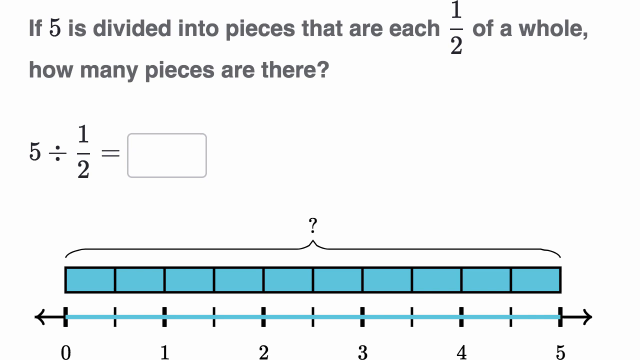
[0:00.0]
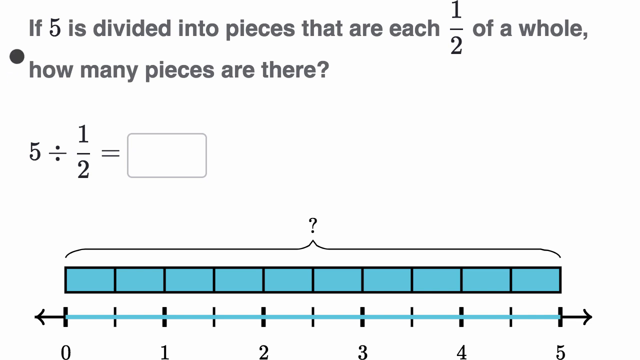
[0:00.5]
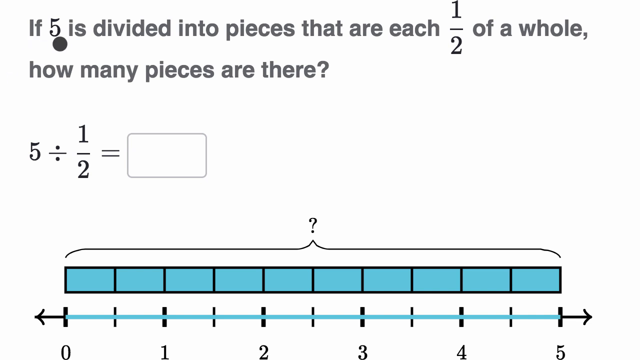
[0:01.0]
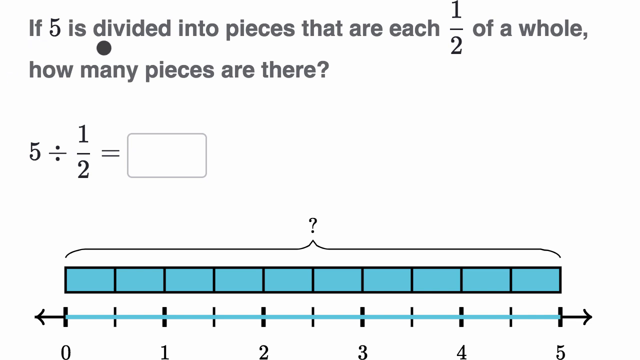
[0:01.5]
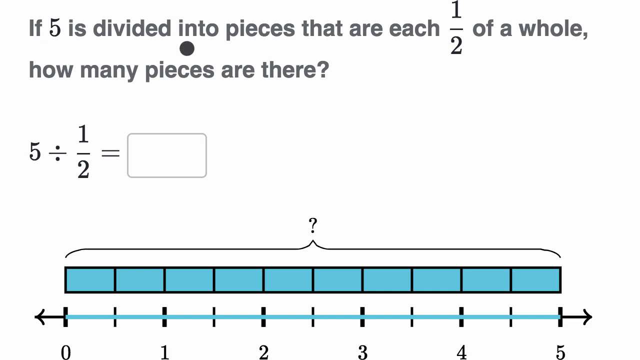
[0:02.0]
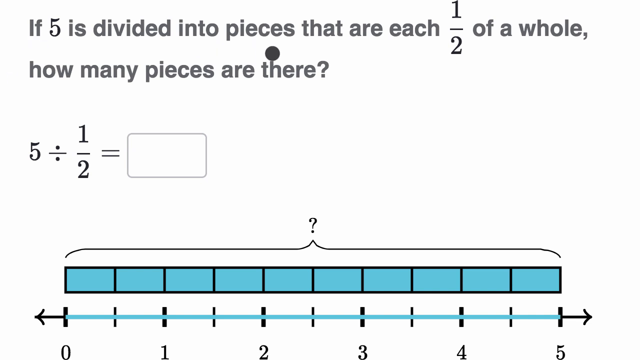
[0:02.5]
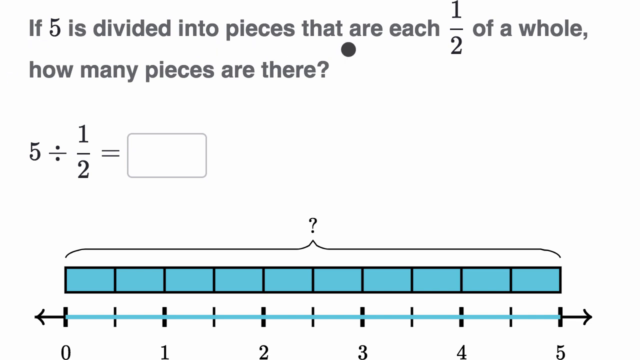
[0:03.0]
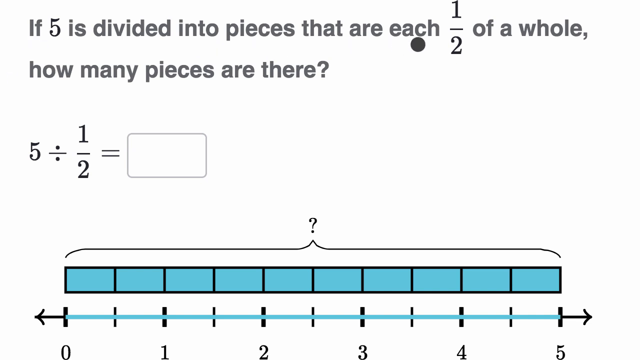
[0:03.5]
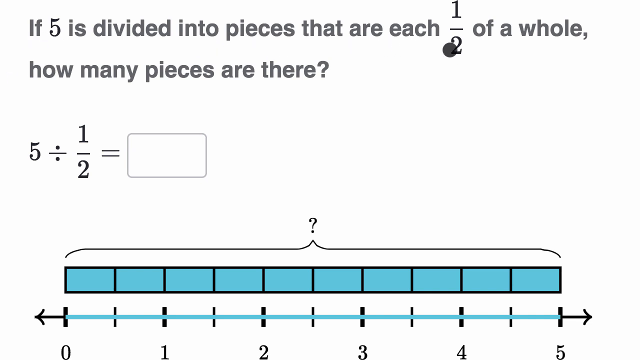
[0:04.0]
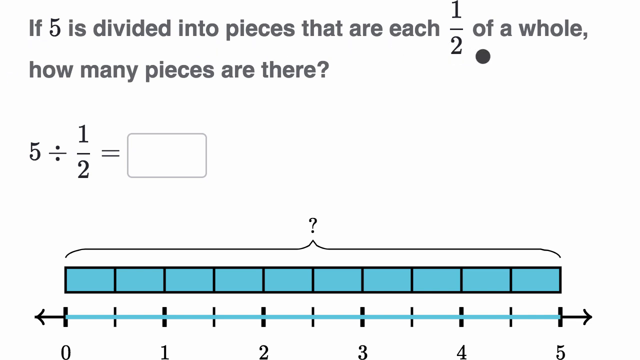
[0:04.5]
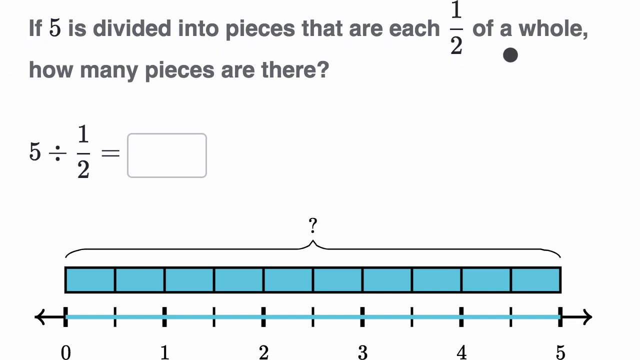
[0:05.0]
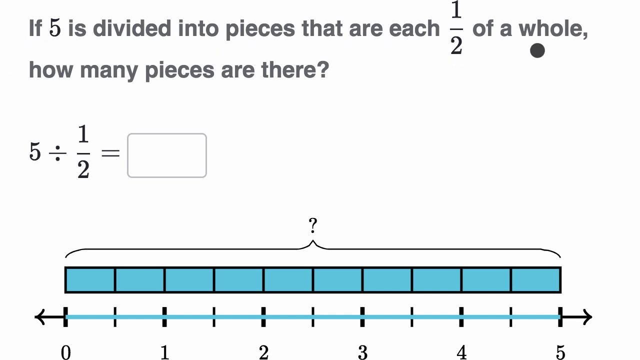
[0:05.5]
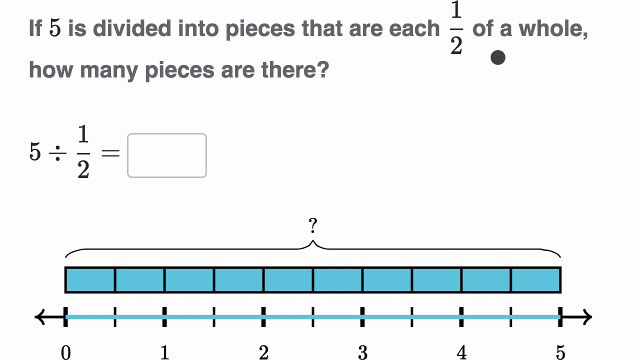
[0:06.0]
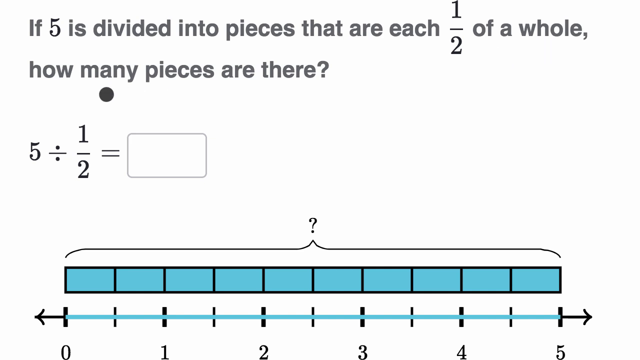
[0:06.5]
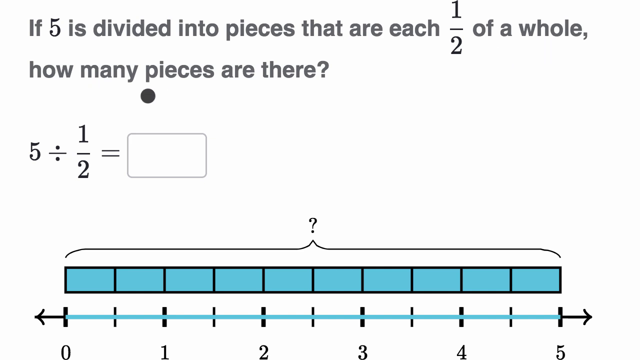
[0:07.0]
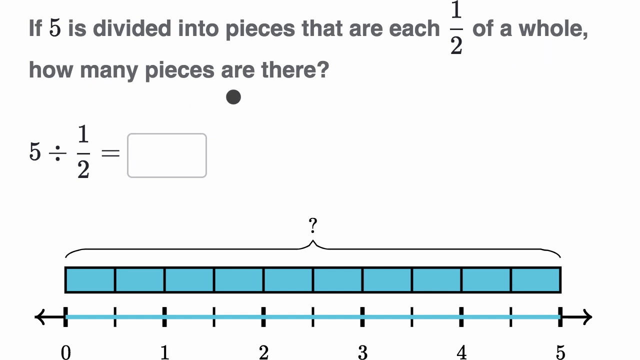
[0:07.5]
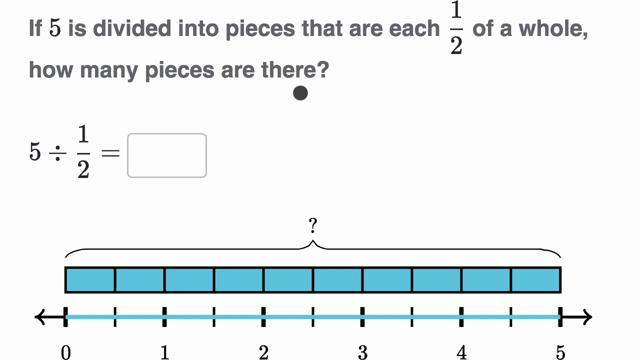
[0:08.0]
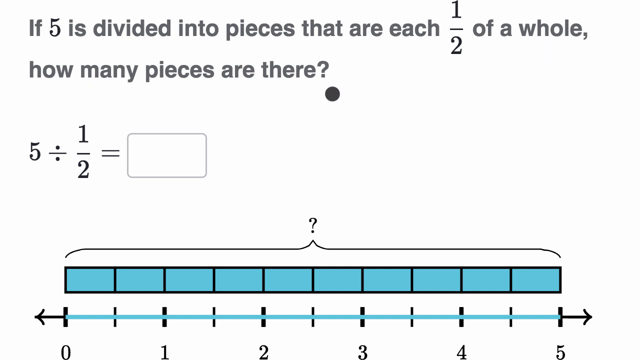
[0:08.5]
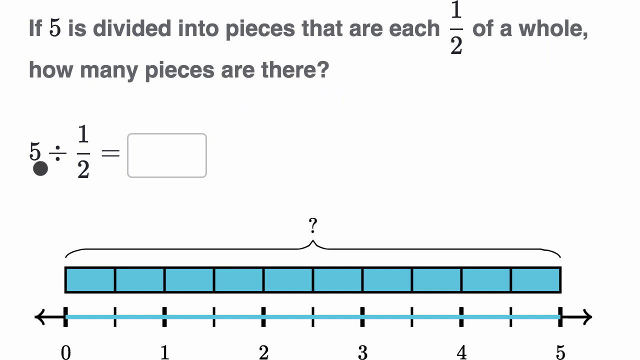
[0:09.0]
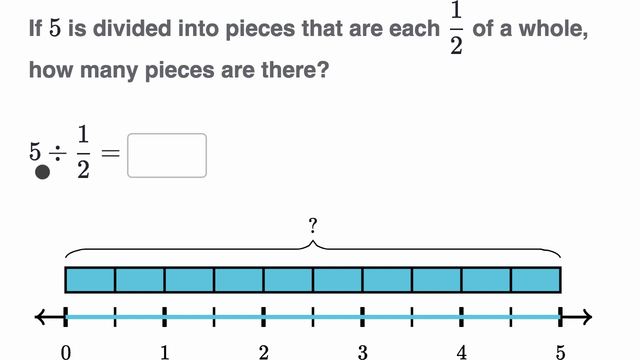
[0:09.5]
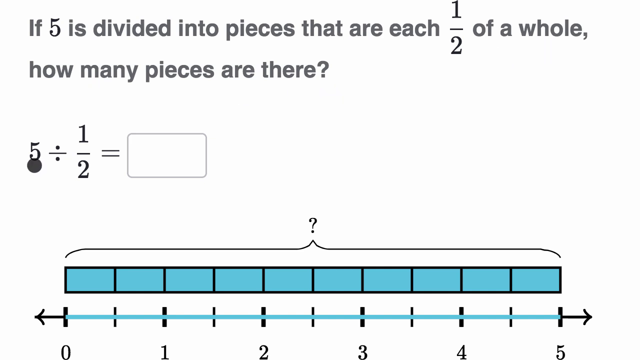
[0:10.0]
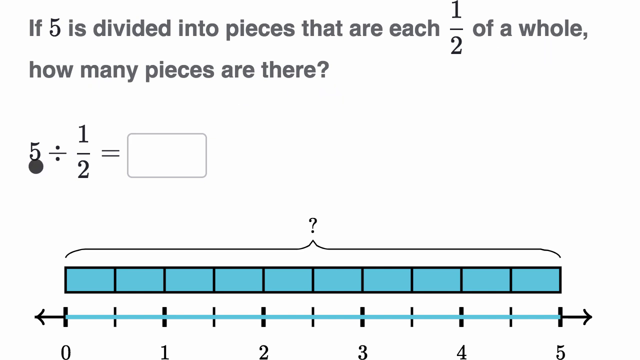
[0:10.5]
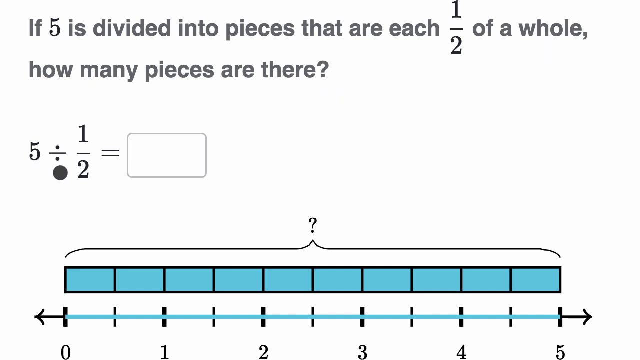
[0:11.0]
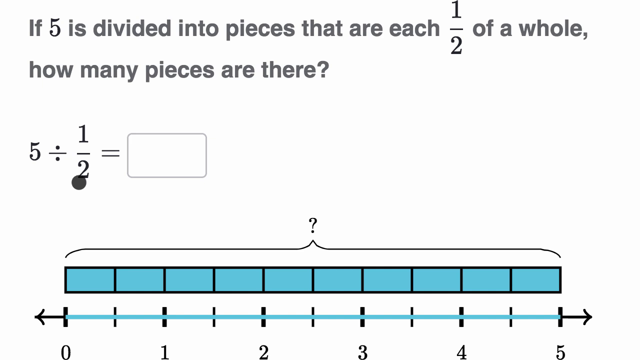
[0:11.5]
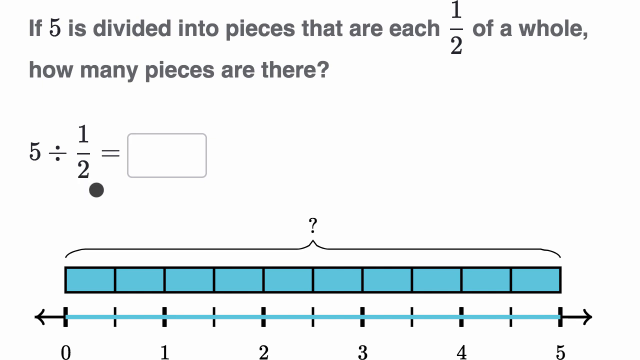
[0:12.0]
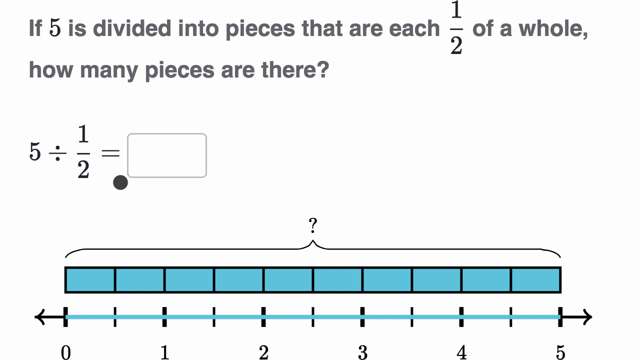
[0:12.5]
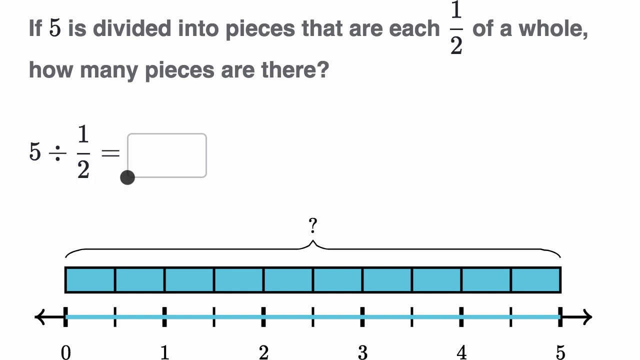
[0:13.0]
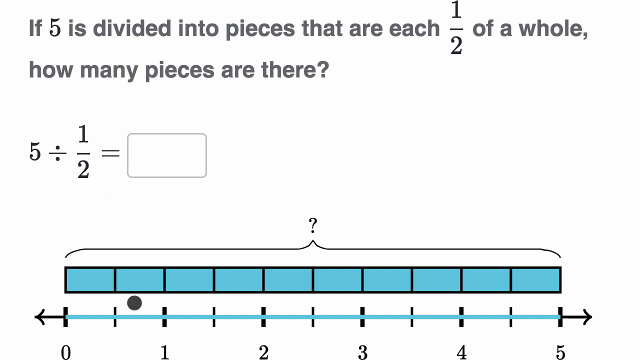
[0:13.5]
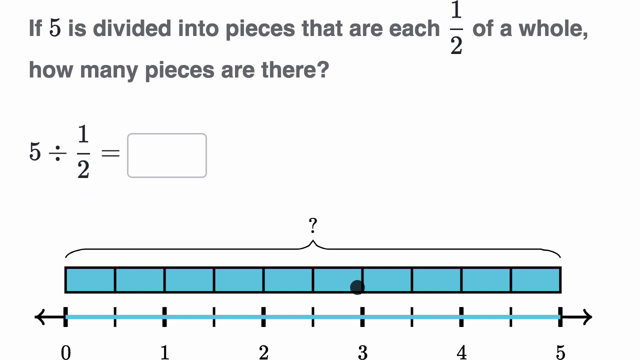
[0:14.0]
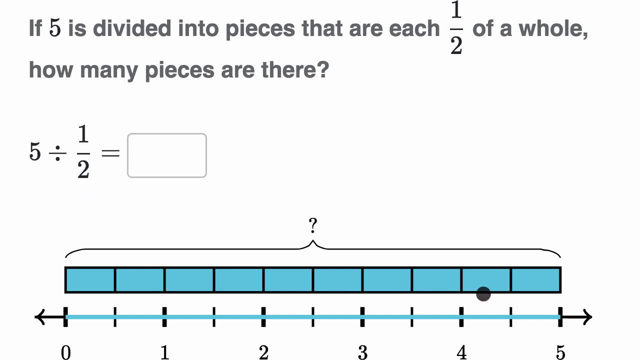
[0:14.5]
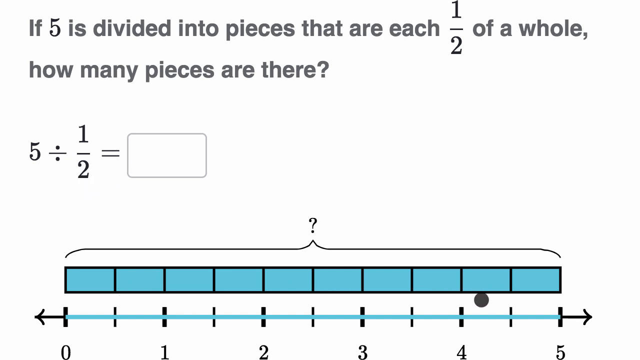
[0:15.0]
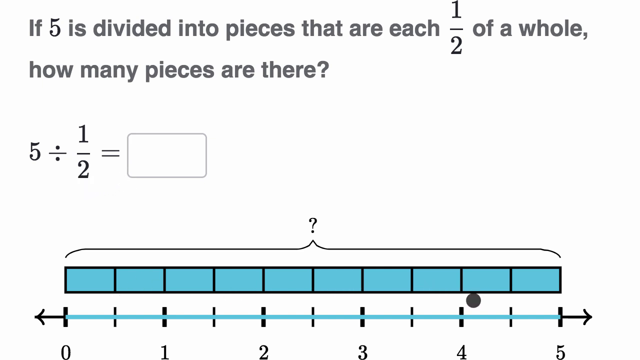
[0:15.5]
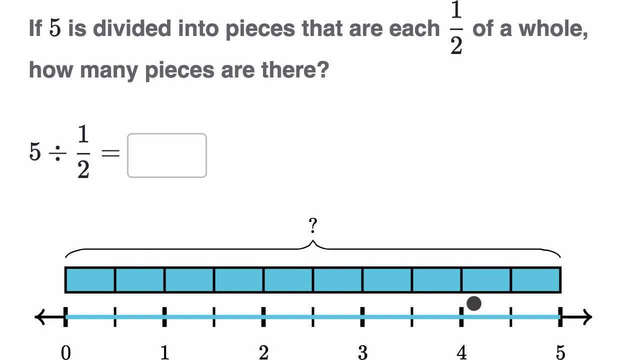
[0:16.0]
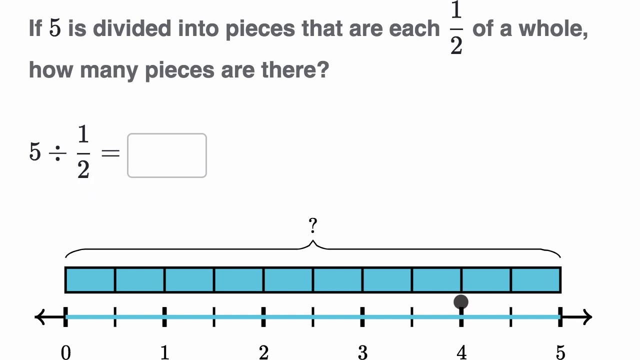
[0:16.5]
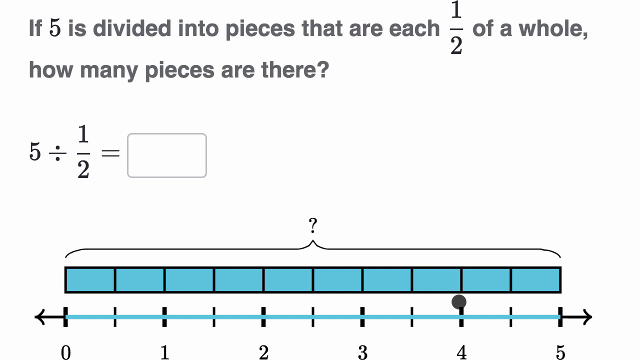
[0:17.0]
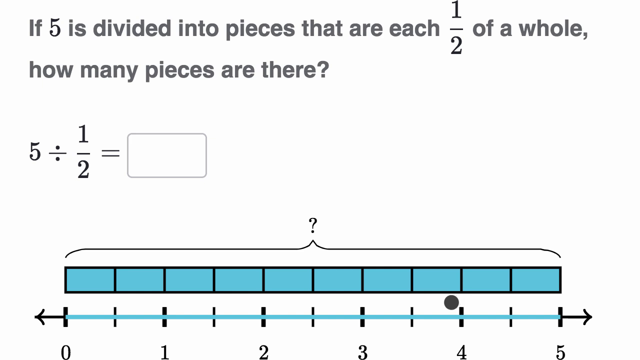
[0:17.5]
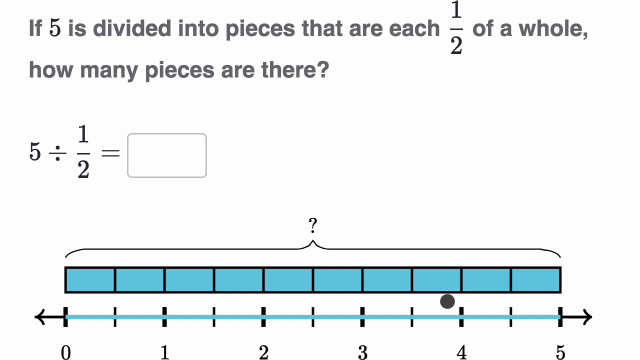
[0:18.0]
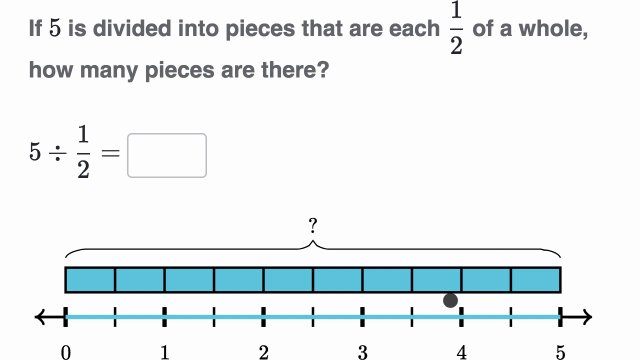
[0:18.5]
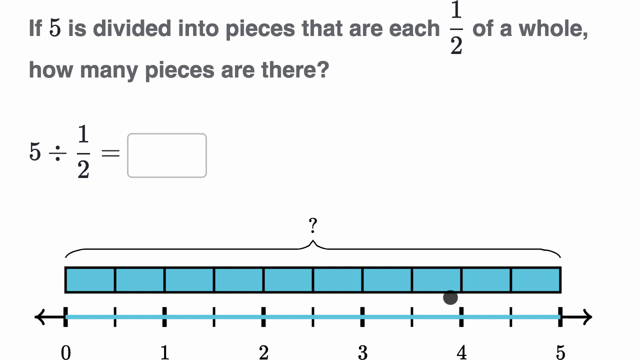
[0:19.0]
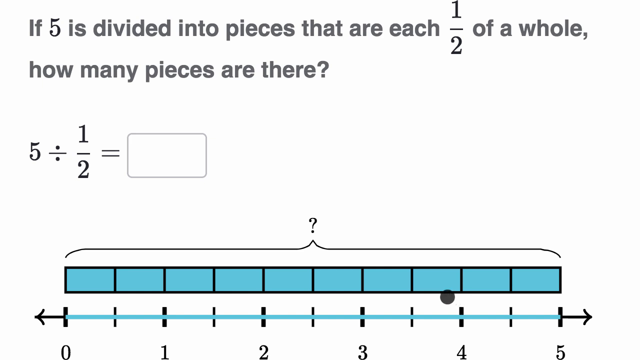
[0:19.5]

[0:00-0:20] Against a white background, there is text at the top of the video and a bar at the bottom. The grey text at the top reads "if 5 is divided into pieces that are each 1/2 of a whole, how many pieces are there?" Beneath it, in the middle of the left side, is a formula or equation in grey text, "5 divided by 1/2 =", with an empty text entry box to its right. Below that is a ? and a bracket that encompasses the space over a horizontal blue bar divided into ten even sections. A black circular cursor appears in the upper left corner and moves right under the grey text, tracing the text to the right. It then hovers over the equation and the empty text entry box, and is dragged down to hover over the right side of the blue bar at the bottom.